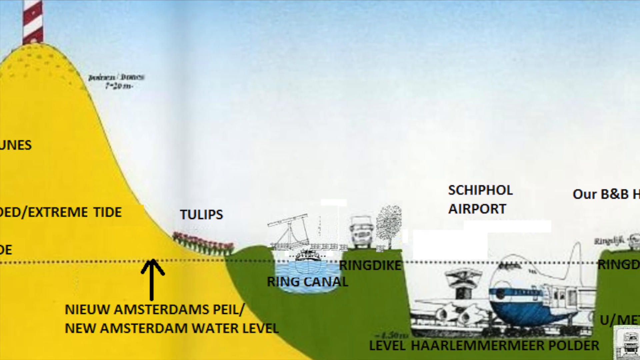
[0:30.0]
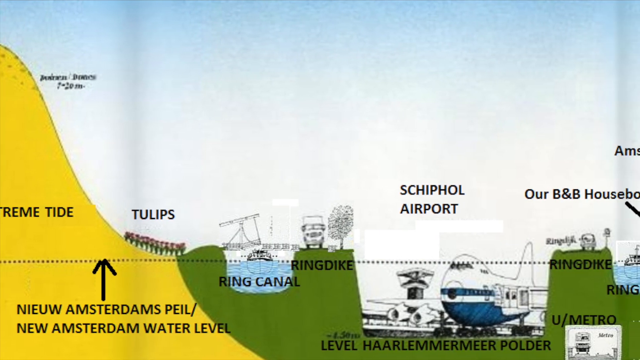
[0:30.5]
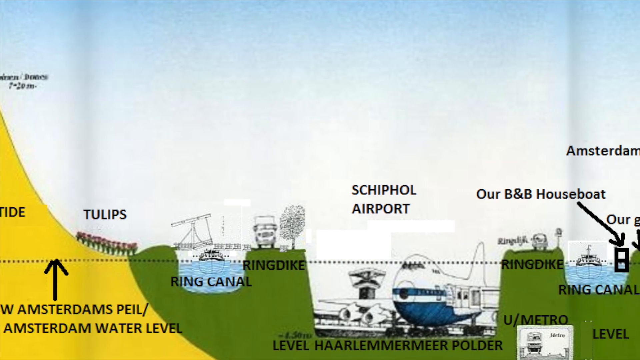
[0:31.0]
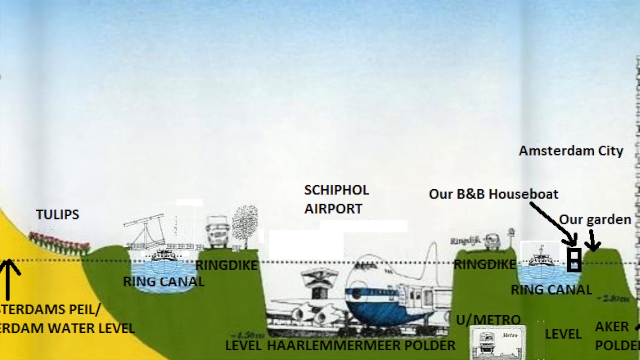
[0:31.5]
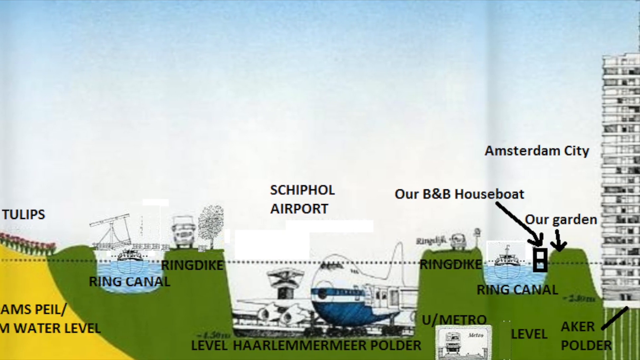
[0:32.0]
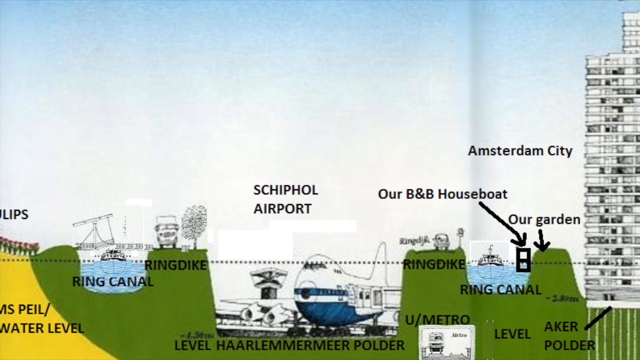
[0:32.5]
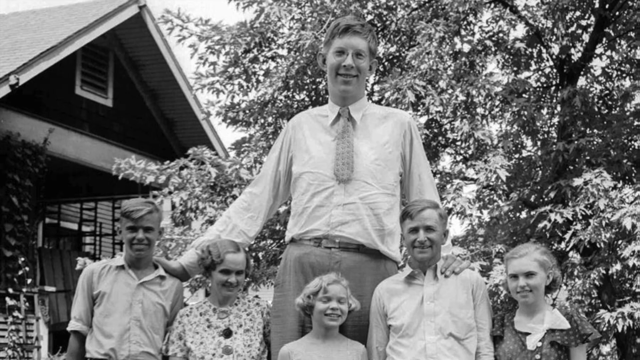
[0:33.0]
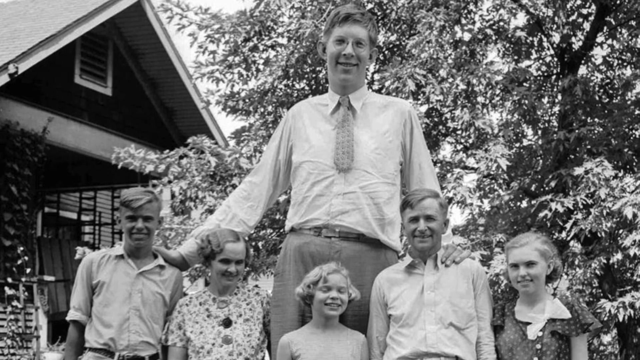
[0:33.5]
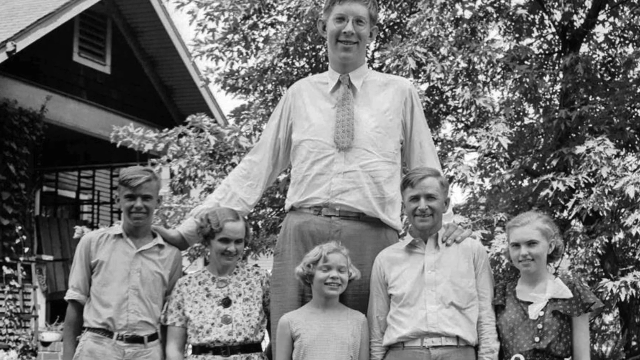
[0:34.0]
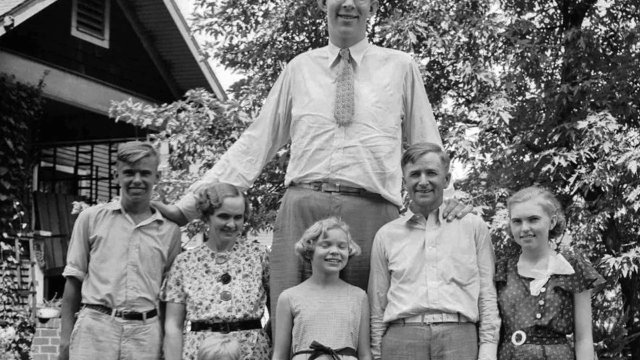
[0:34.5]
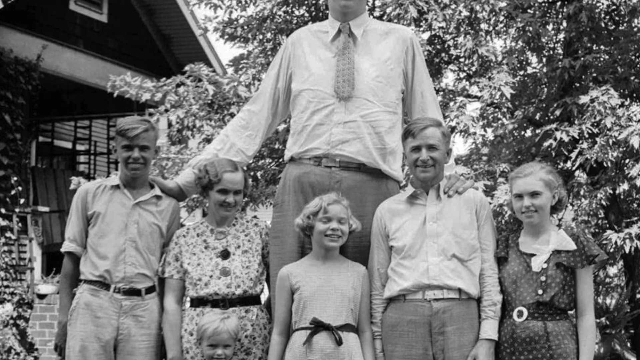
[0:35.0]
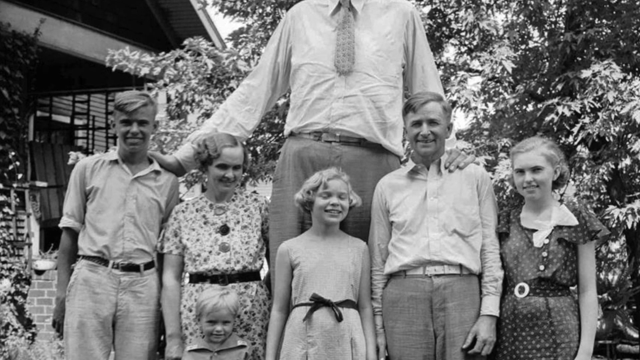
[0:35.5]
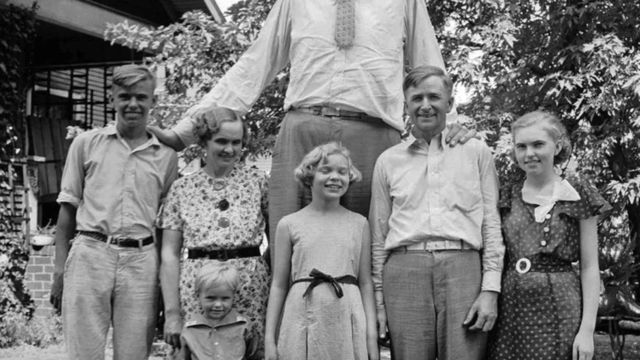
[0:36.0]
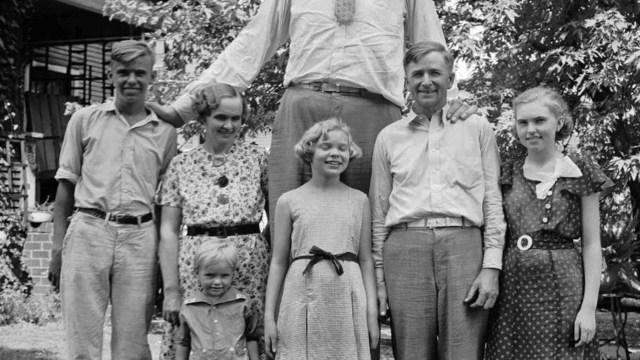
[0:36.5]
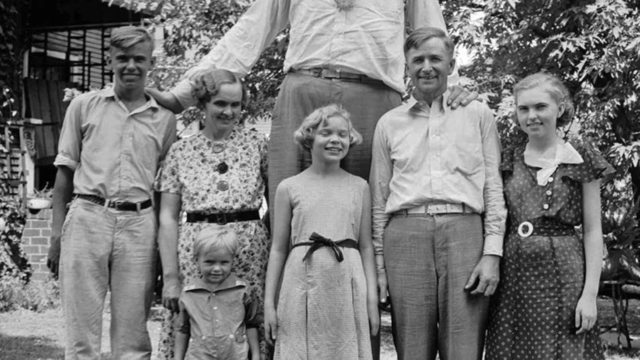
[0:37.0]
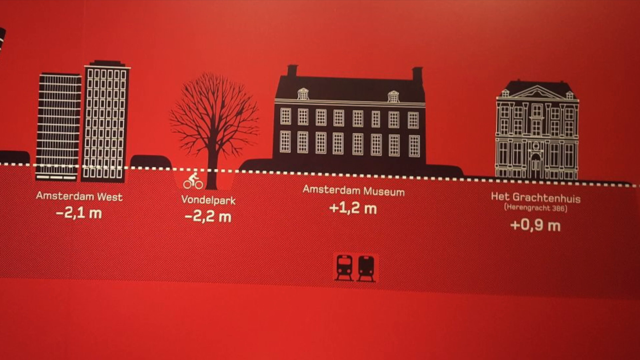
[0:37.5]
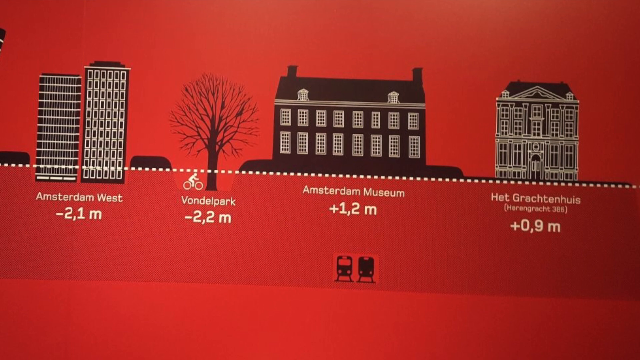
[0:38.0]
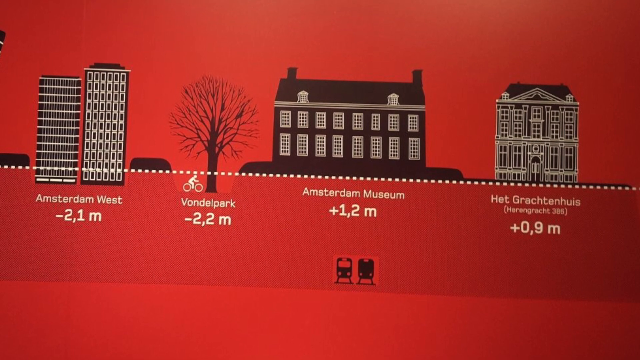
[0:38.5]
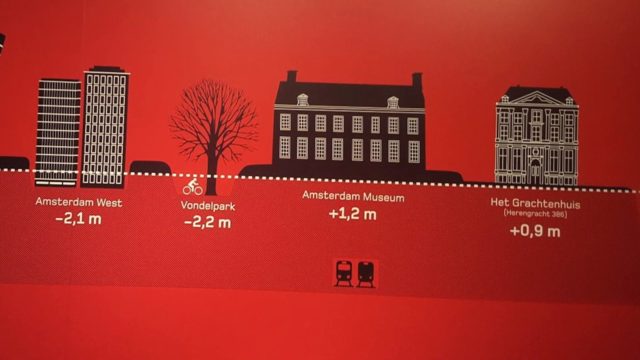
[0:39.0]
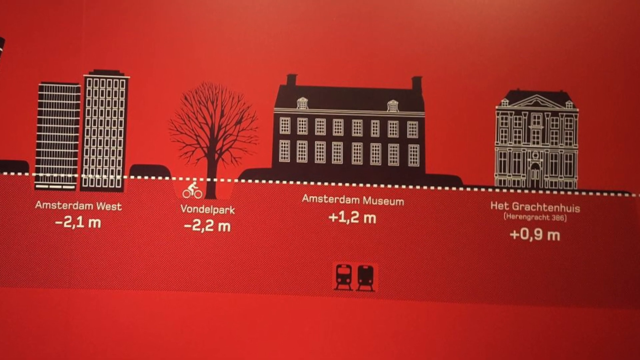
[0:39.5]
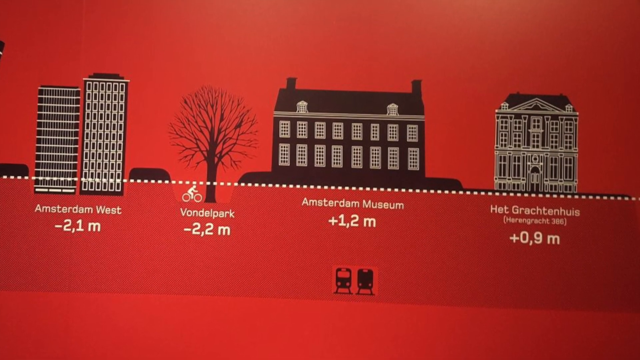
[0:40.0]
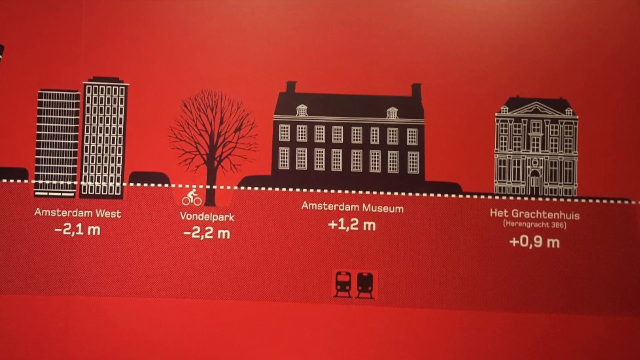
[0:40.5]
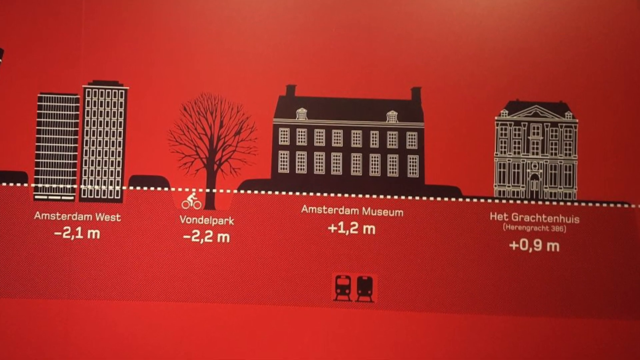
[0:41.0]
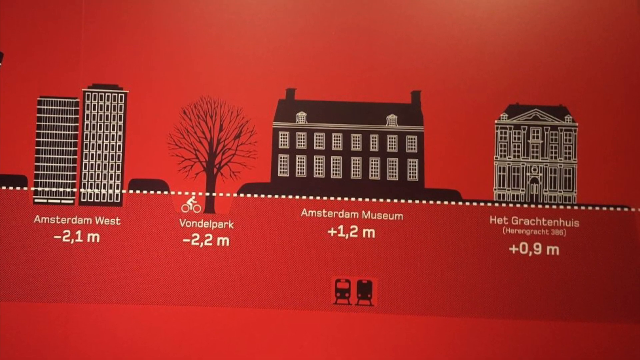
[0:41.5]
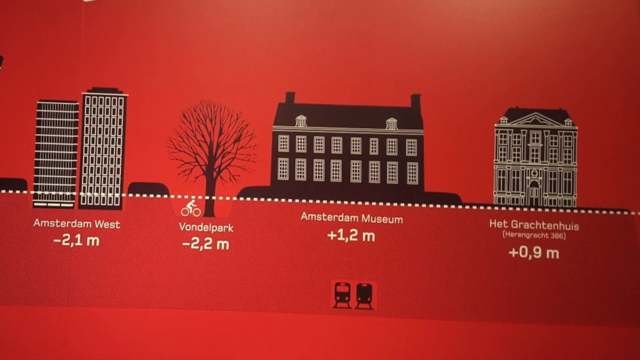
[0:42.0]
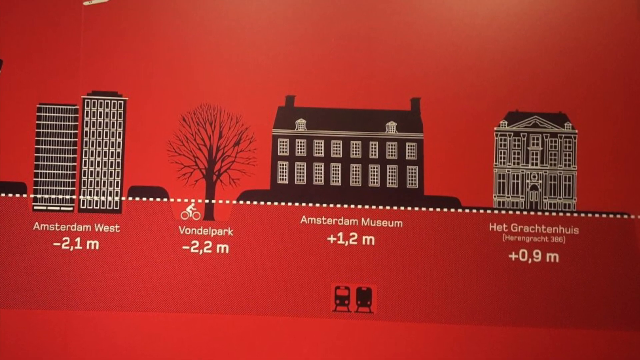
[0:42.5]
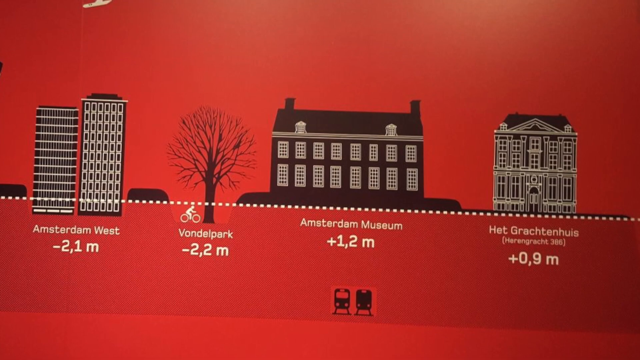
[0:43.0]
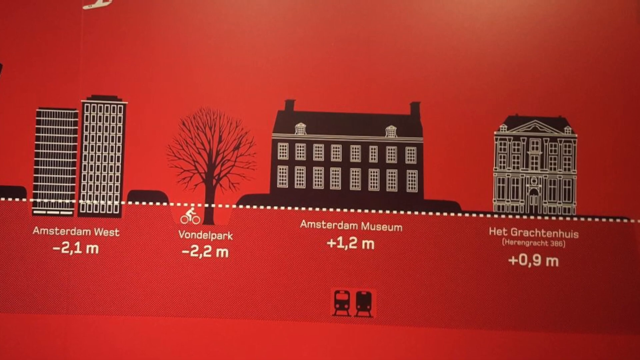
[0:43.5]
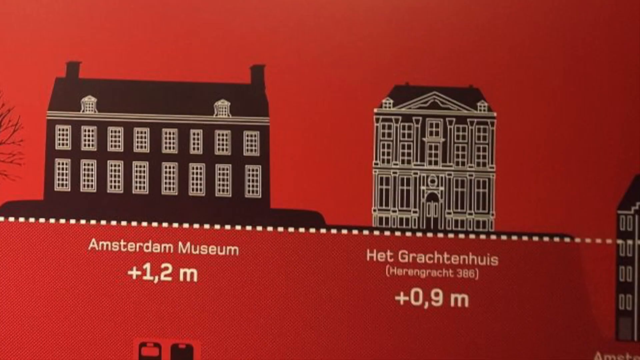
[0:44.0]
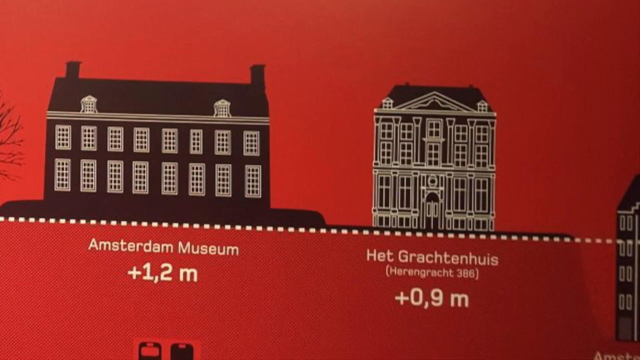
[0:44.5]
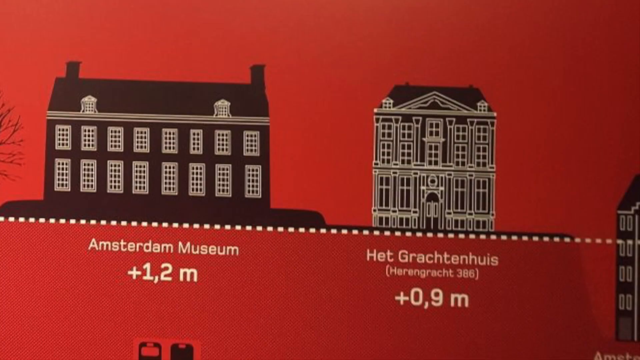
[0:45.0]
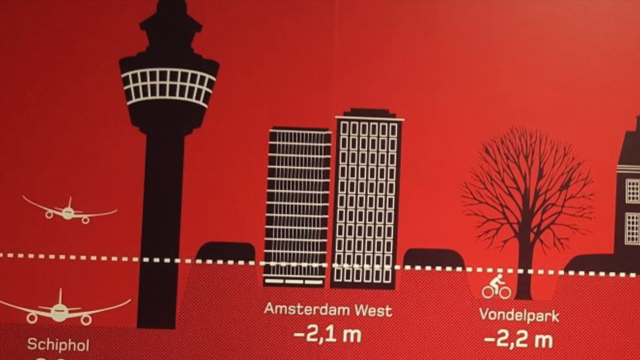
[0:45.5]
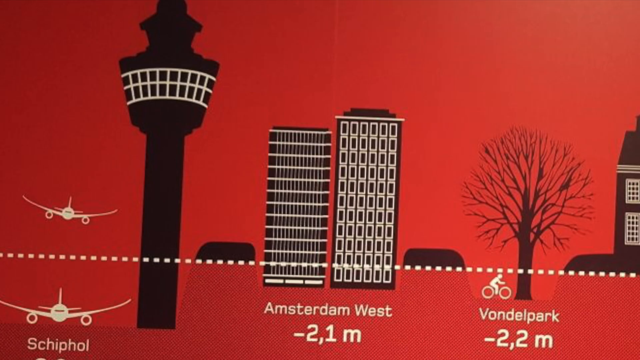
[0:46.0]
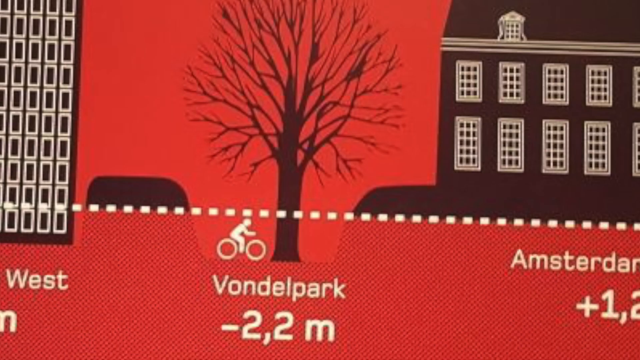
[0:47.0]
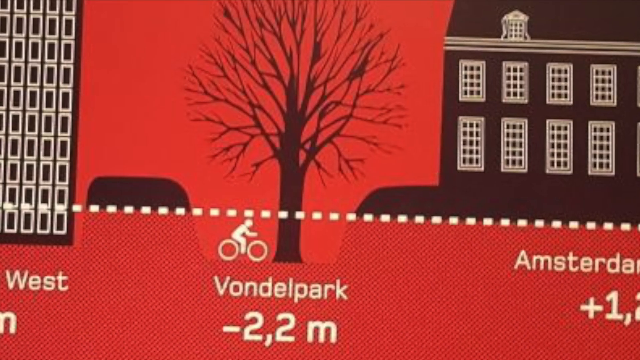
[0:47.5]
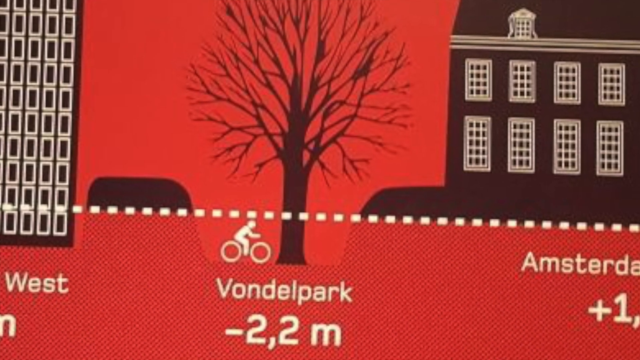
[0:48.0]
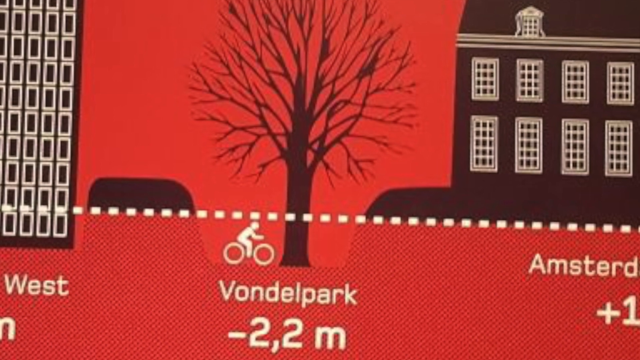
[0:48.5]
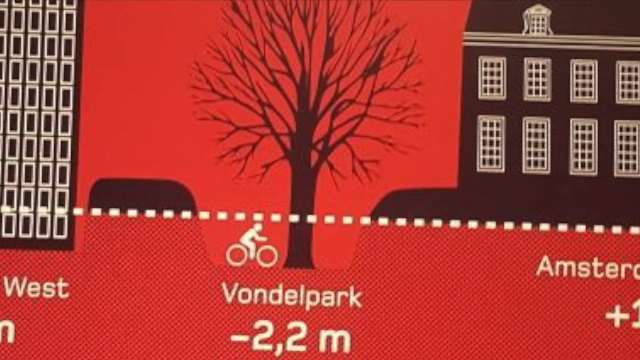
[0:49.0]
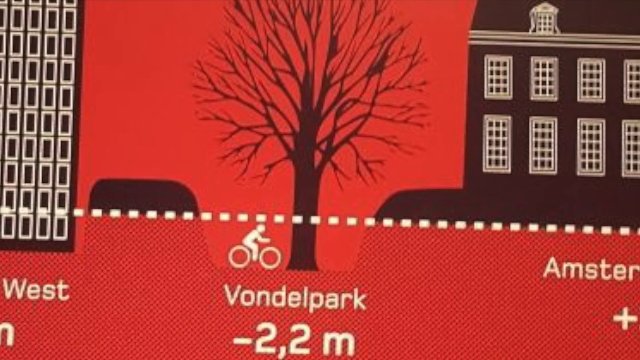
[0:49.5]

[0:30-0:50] The scientific diagram shows sand dunes rising up on the left-hand side in yellow, with tulips at the bottom of the dunes, followed by a small green area with "Ring Canal" and "Ring Dyke" written on it, then Schiphol Airport and a diagram of an airplane. The shot changes to an old black-and-white photograph of an exceptionally tall man standing behind five people, presumably his family: two males and three females. Another diagram follows, showing Amsterdam West at minus 2.1 miles, Vondelpark at minus 2.2, Amsterdam Museum at plus 1.2 and Het Grachtenhuis at plus 0.9, possibly water levels from the flooding. There is a zoomed-in shot of the two Amsterdam buildings, then a zoomed-in shot of Amsterdam West and Vondelpark, along with an airport control tower and two airplane diagrams, one in the sky and one on the ground. The view zooms in again to Vondelpark, which has a tall picture of a tree and a small picture of a cyclist just next to it, with a hash line across the top of the cyclist. Then someone is shown cycling in a swimming pool, before the video goes back to the sand dune diagram and the picture of the tall man with the family. It returns to the diagram of the buildings in Amsterdam, panning slowly upwards, and zooms in on the buildings one after the other as before, settling on Vondelpark.